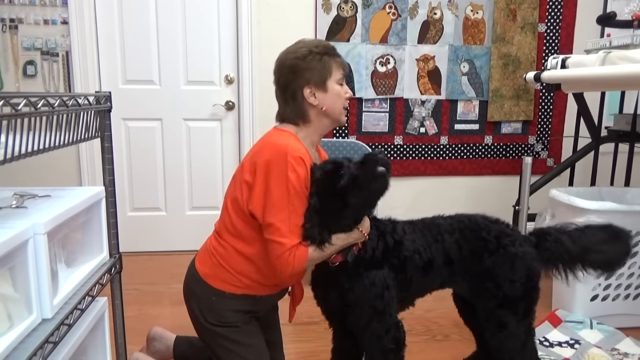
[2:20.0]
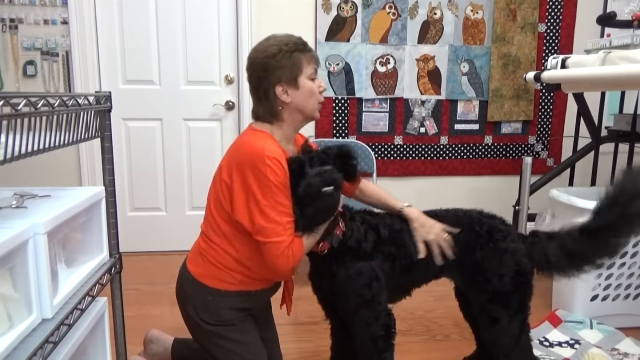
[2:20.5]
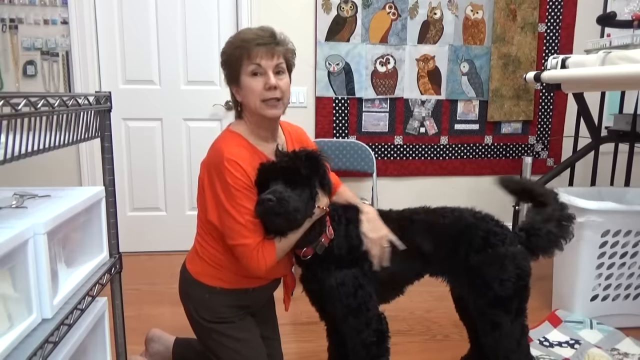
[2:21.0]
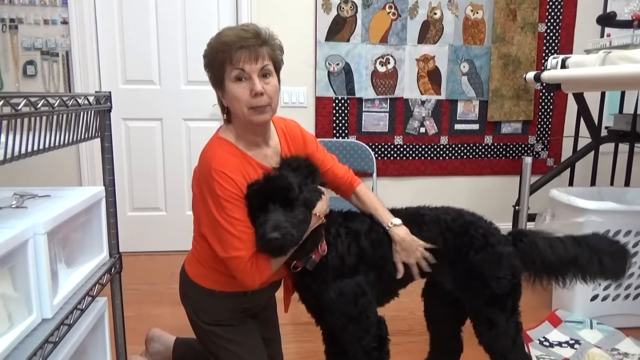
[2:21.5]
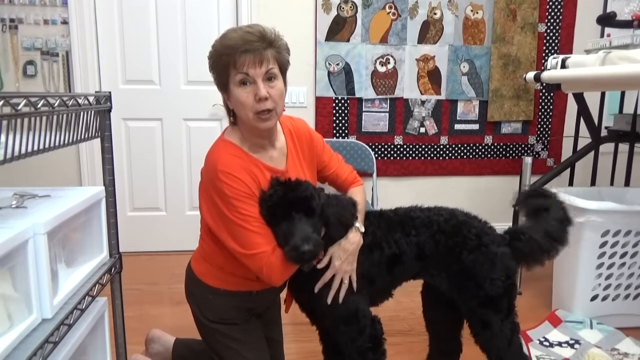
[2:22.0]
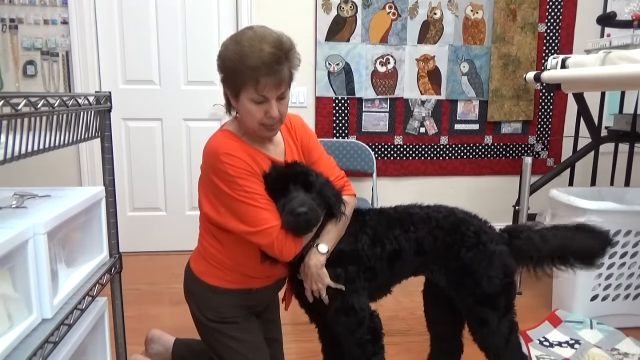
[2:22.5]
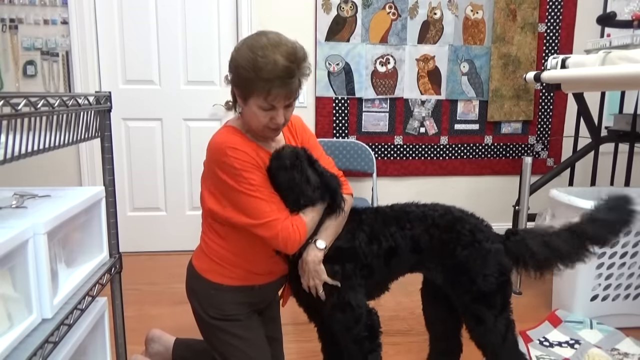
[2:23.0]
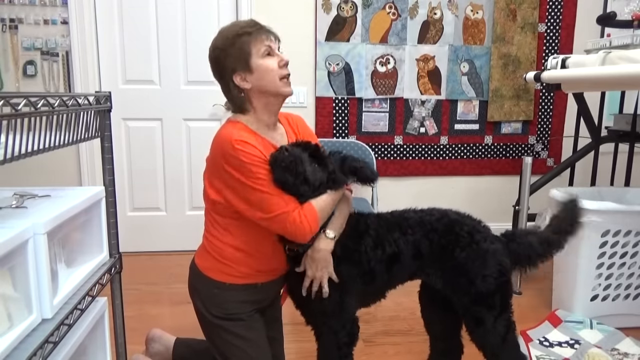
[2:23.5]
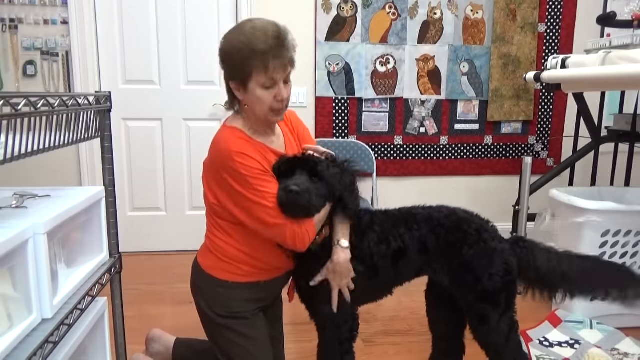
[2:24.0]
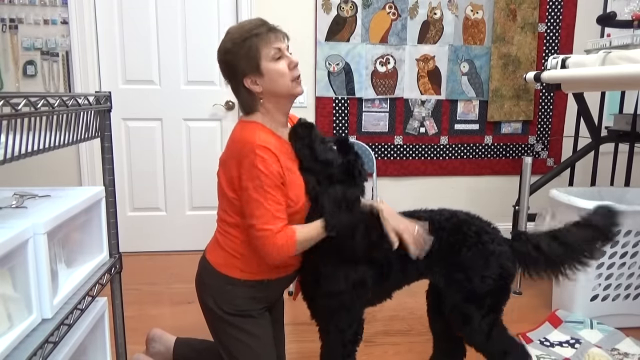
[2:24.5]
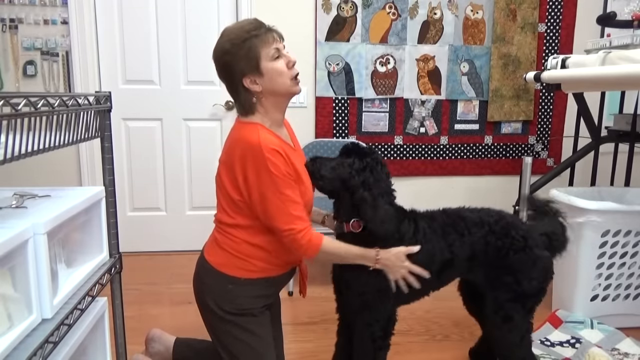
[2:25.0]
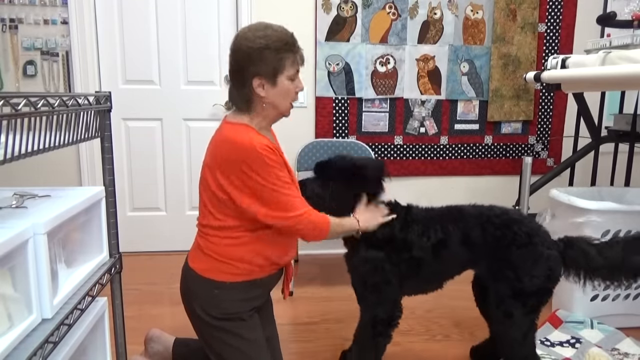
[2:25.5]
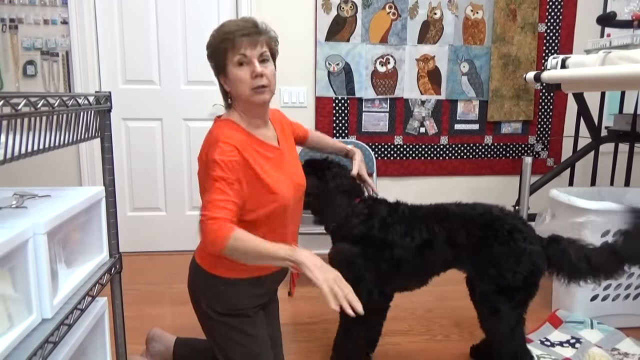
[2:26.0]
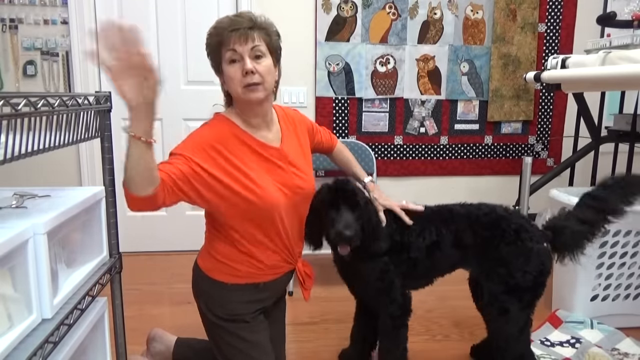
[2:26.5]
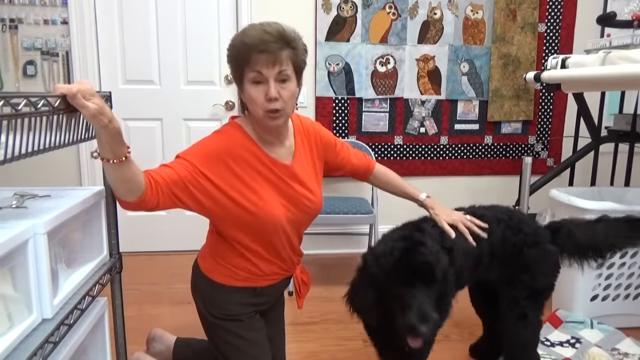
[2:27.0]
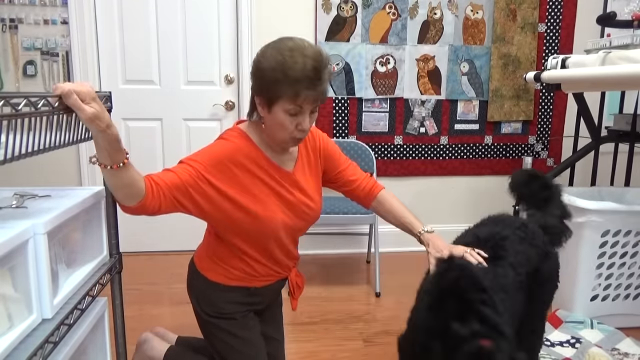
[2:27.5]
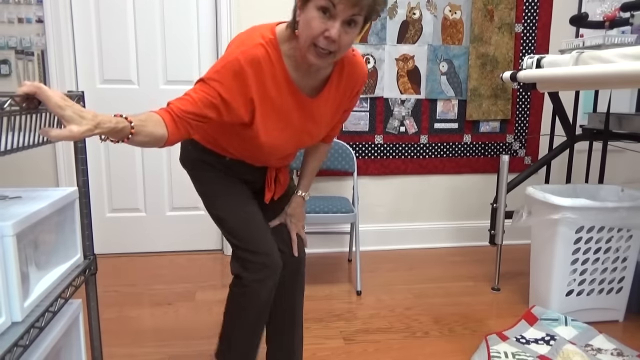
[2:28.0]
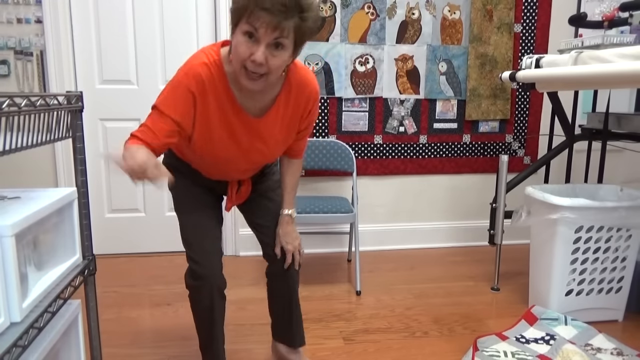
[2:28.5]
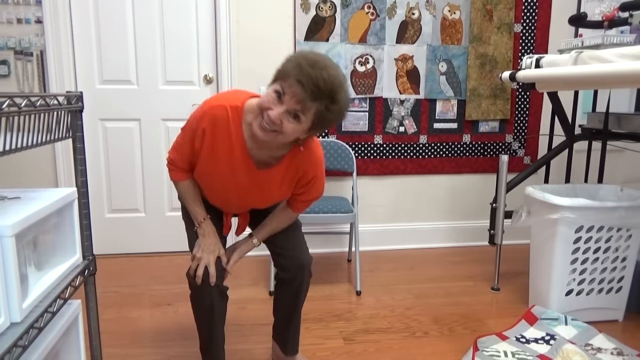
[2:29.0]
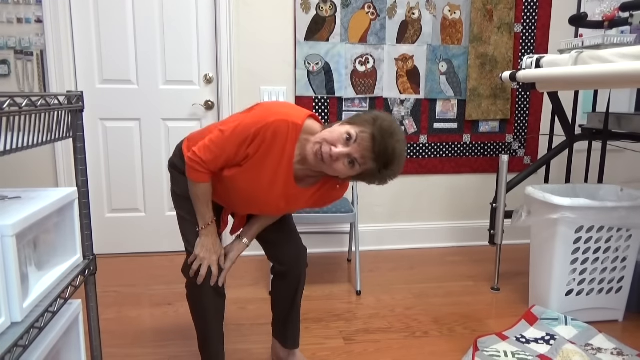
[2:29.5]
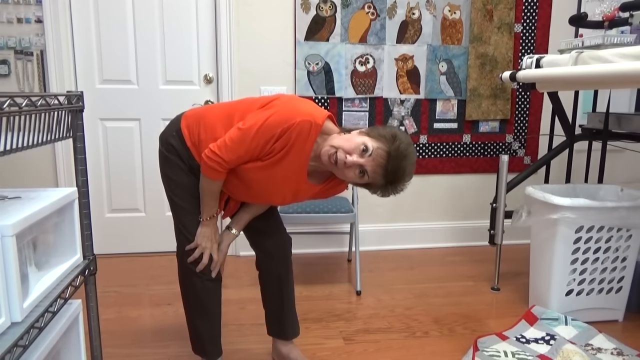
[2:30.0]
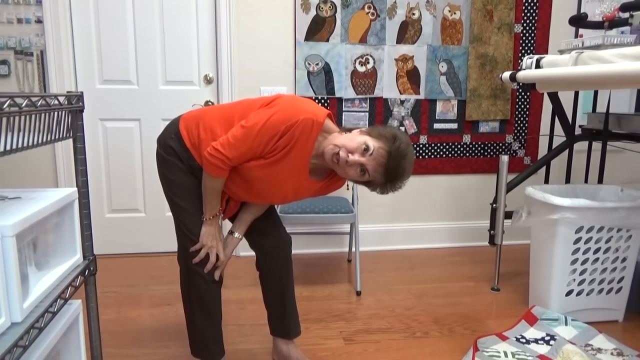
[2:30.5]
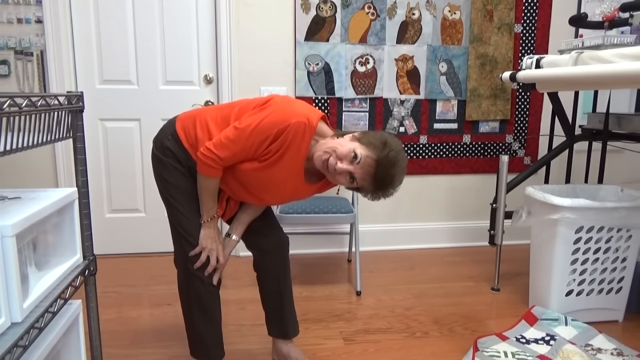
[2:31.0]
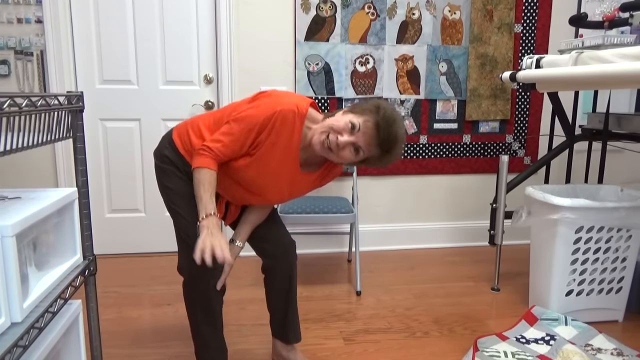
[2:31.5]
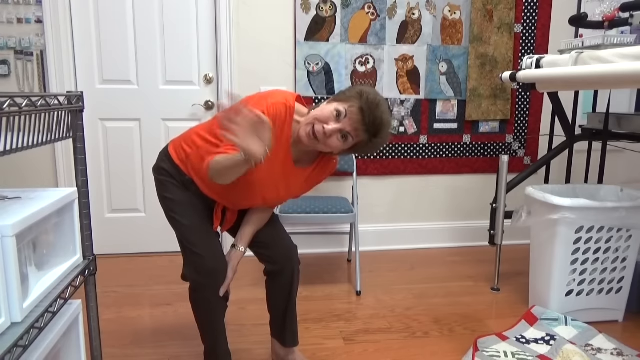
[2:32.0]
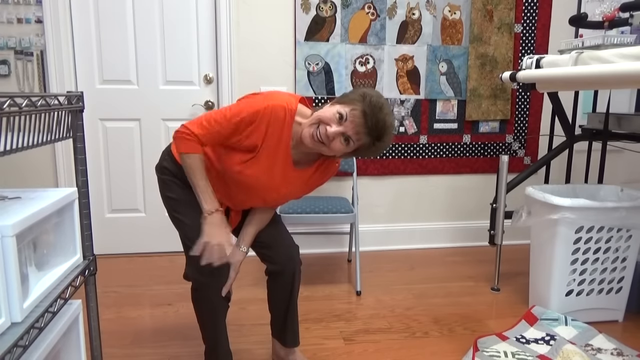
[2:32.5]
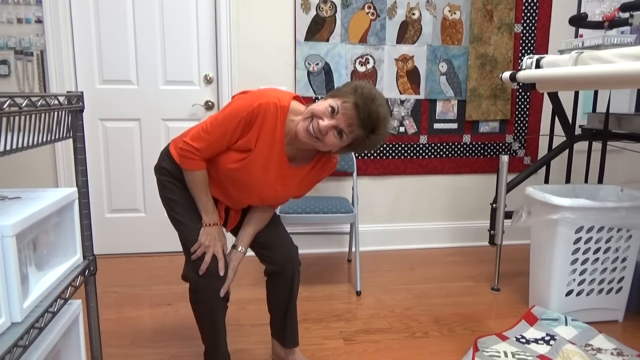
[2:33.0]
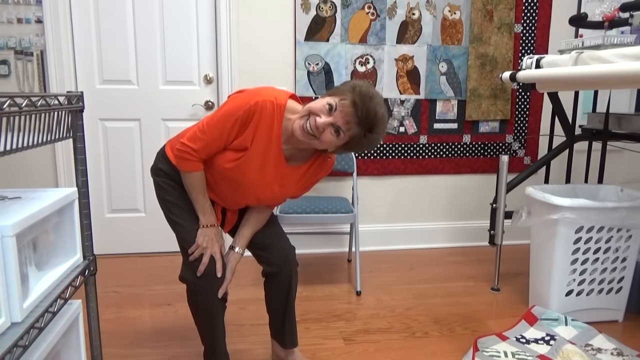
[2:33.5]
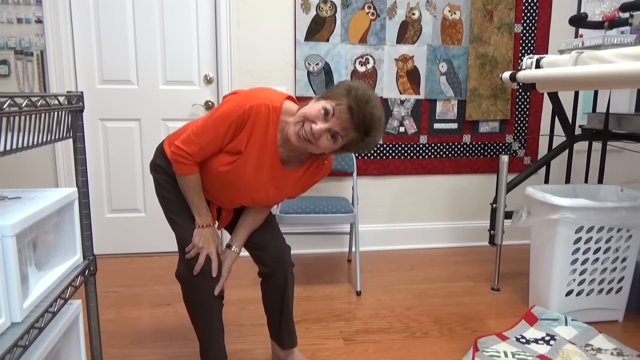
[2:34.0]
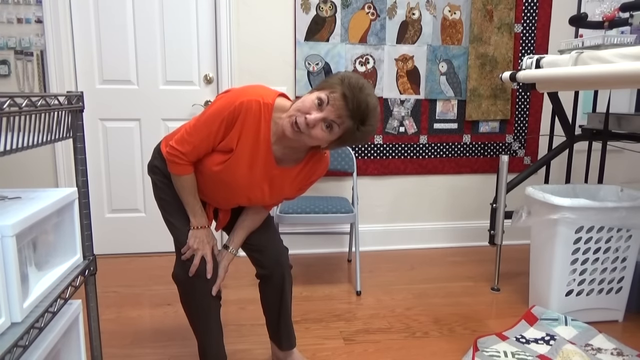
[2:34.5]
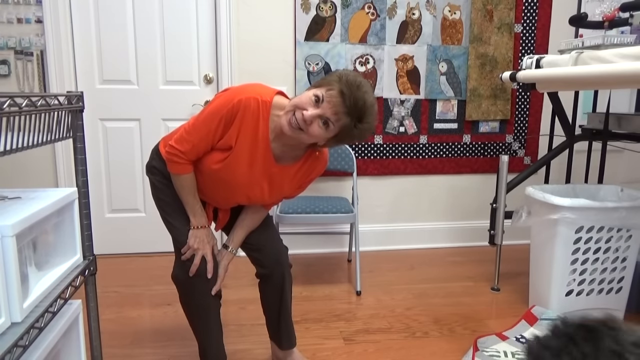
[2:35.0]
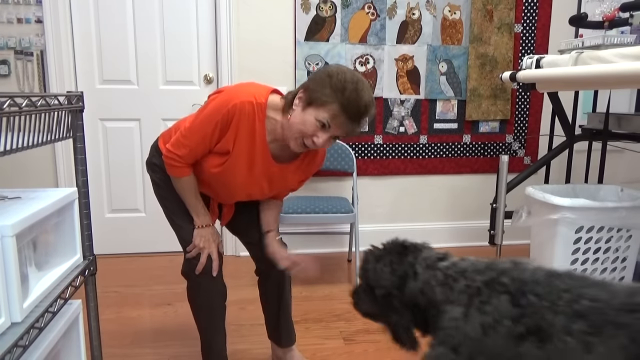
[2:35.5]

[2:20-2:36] The woman seems to be hugging and playing with the midnight black lab, hugging his face and choking him a little, but he seems very comfortable. While she plays, the dogs leave, and she is halfway standing, bending over to the right of the screen, and waves goodbye. One of the dogs comes back to her and she pets him before the video ends. Both dogs look very playful and ecstatic, running around in circles and looking very energetic.